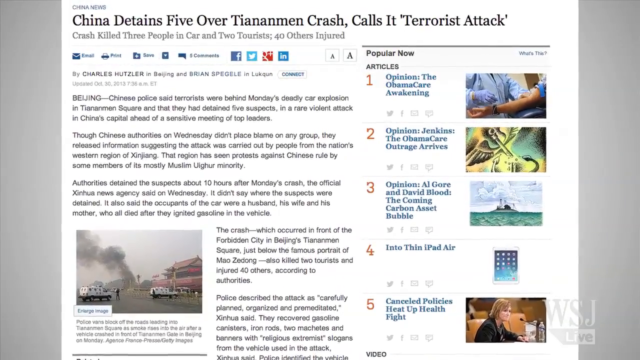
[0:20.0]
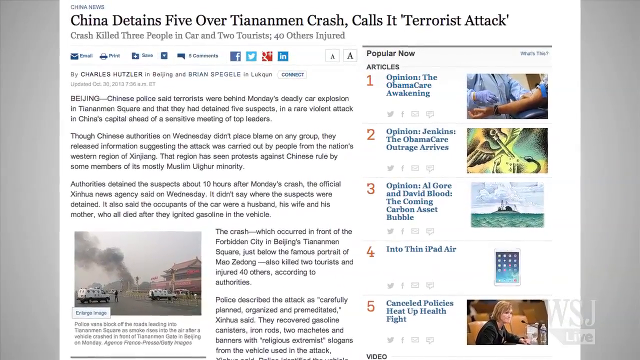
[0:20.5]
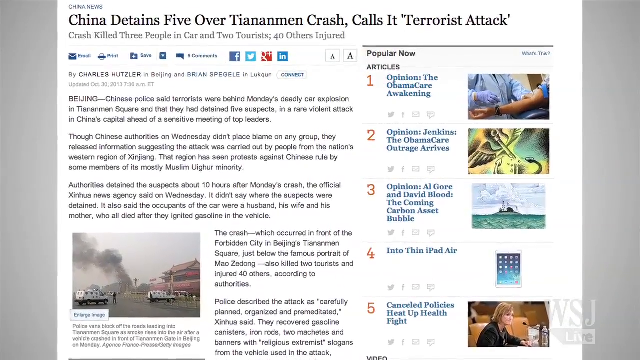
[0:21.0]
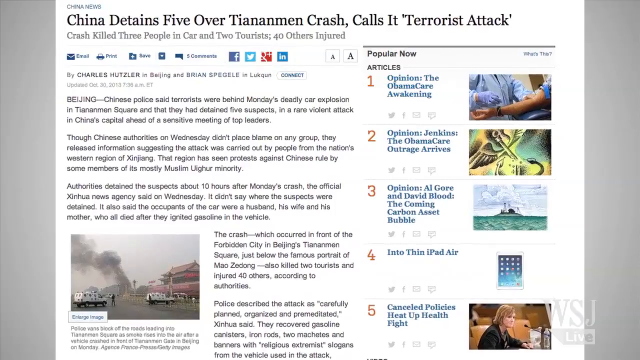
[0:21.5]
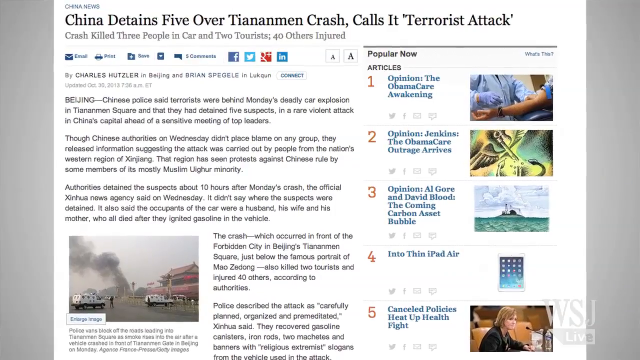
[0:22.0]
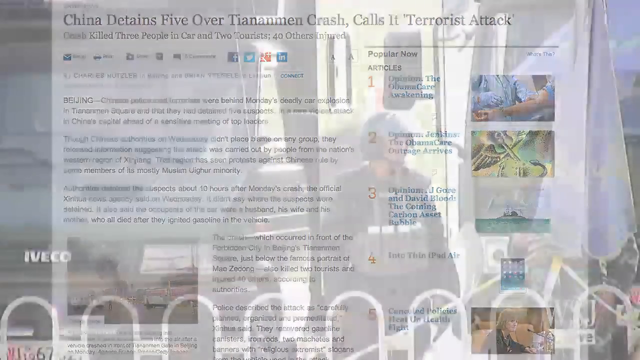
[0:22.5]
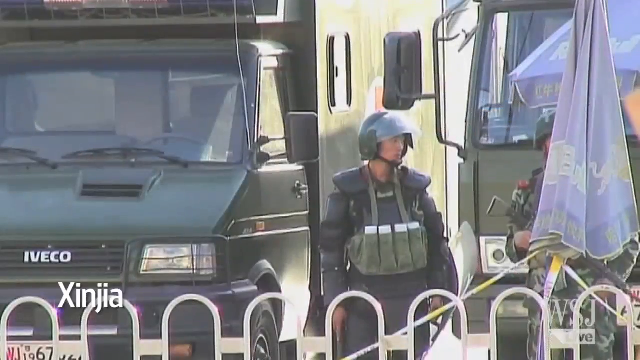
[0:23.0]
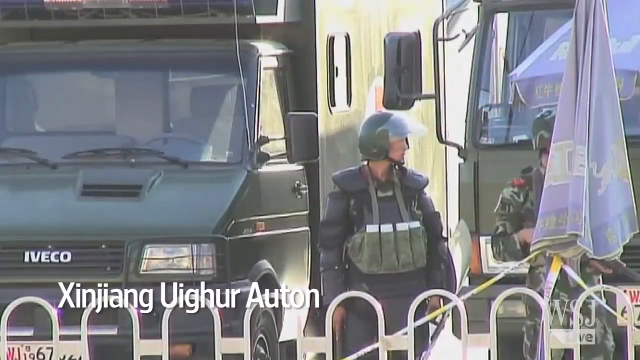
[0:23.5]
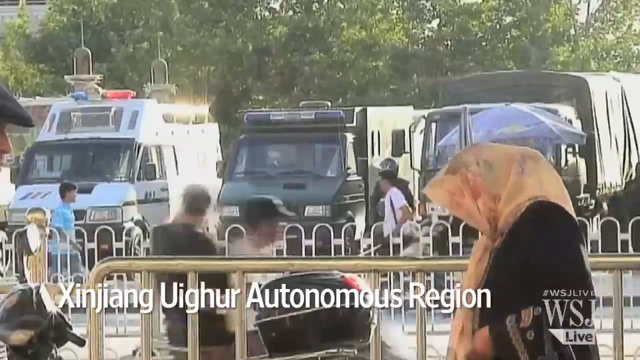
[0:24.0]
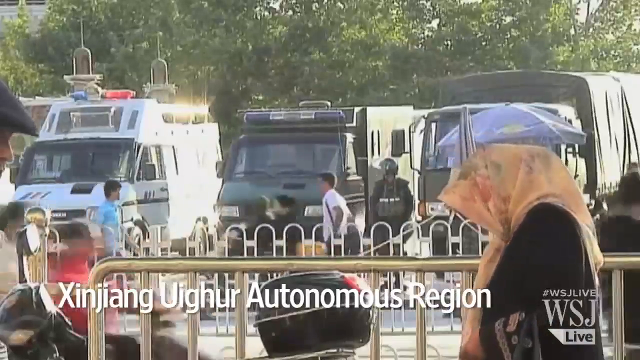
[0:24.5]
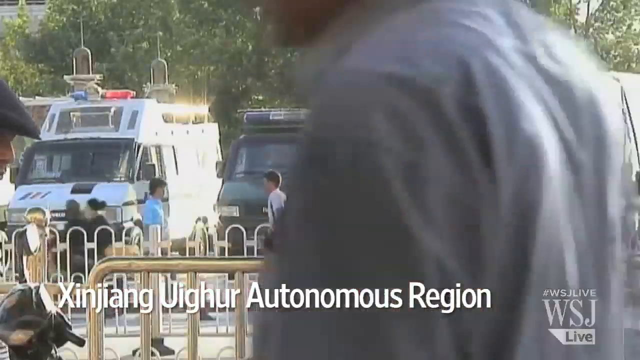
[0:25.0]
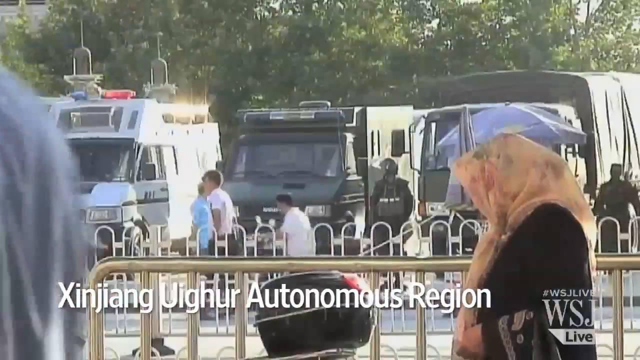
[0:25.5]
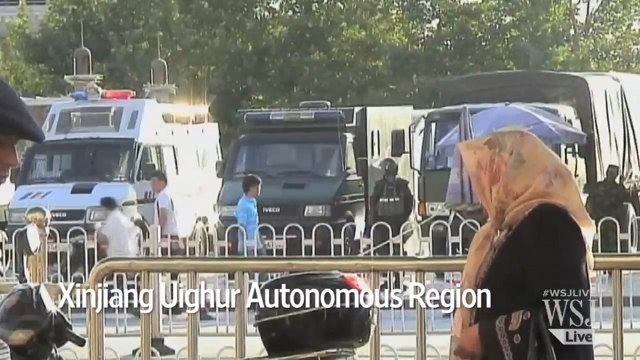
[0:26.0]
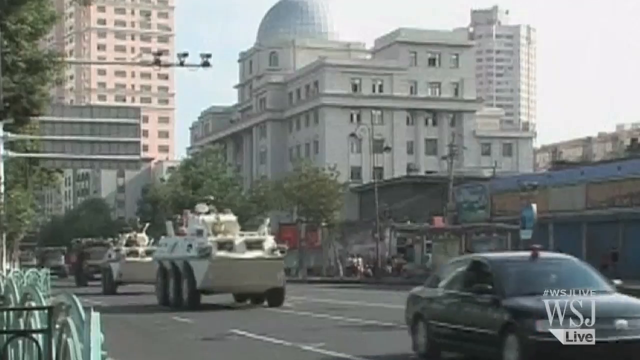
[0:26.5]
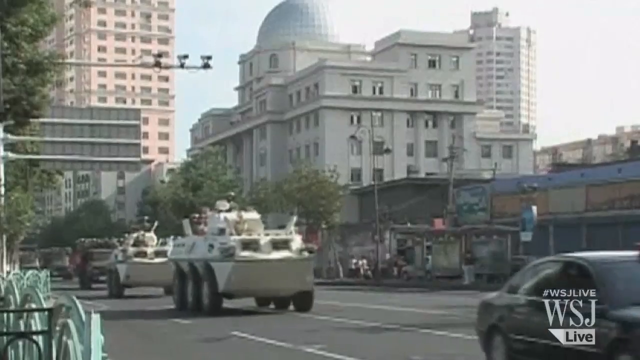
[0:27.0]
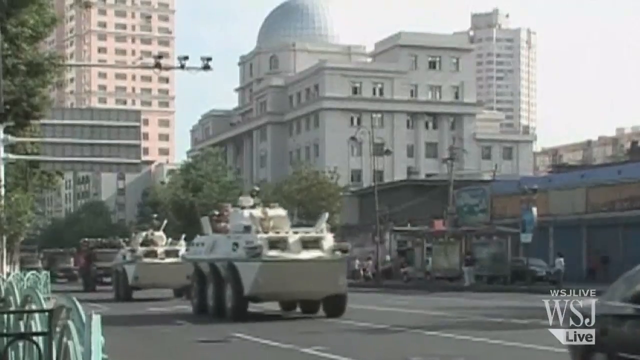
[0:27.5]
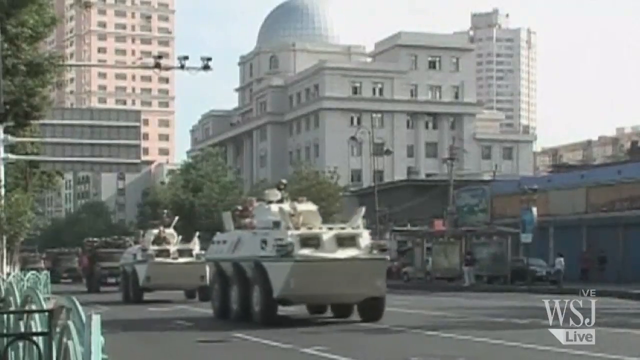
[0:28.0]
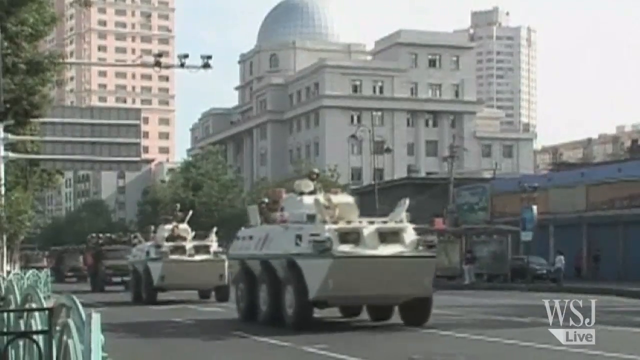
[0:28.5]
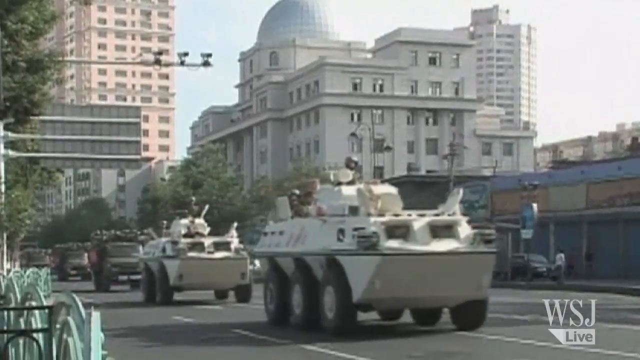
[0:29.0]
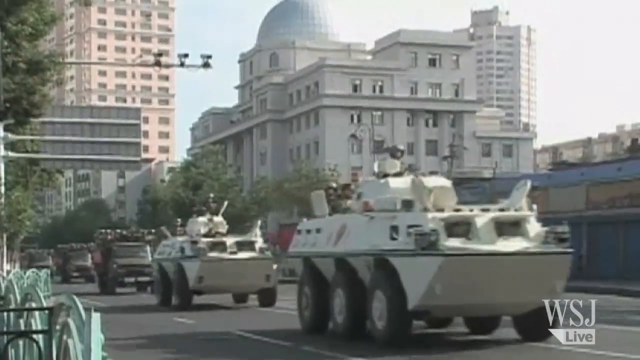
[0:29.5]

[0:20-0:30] The camera keeps zooming in on the article headlined "China detains five over Tiananmen crash calls it terrorist attack." Footage then shows a different area, apparently Xinjiang, with text reading "autonomous region." What looks like an ambulance is on the left side, with army-type trucks towards the right side. It cuts to what looks like old footage of large tanks driving through a street from left to right, then zooms in on soldiers sticking out of the tanks.